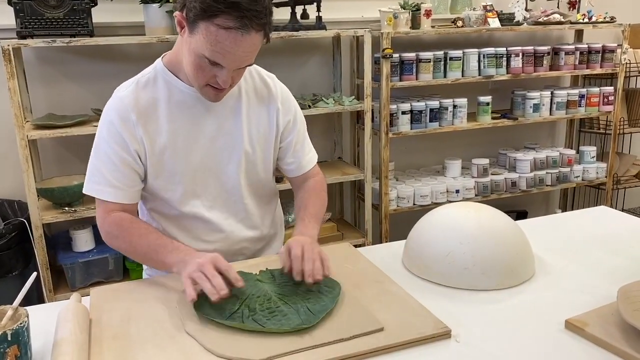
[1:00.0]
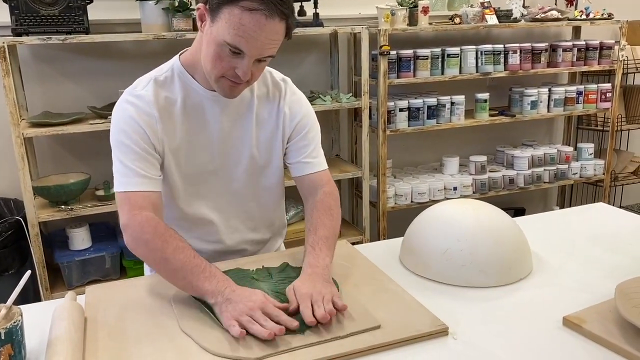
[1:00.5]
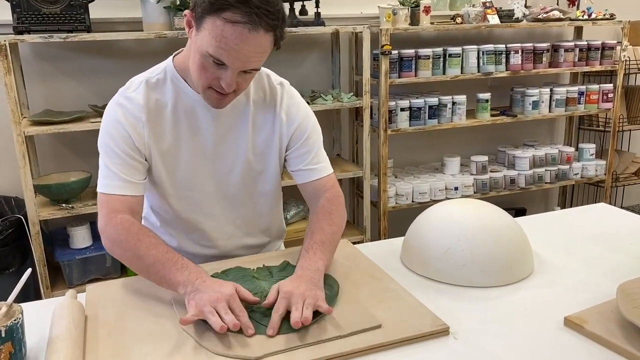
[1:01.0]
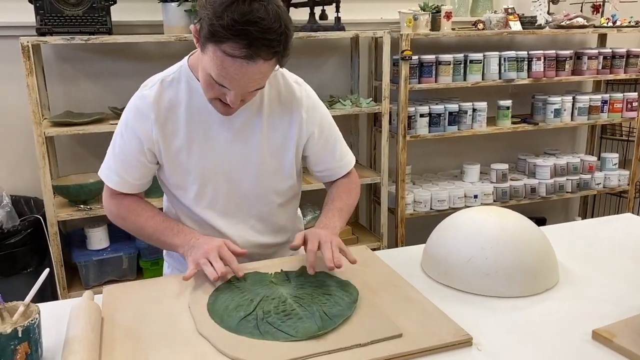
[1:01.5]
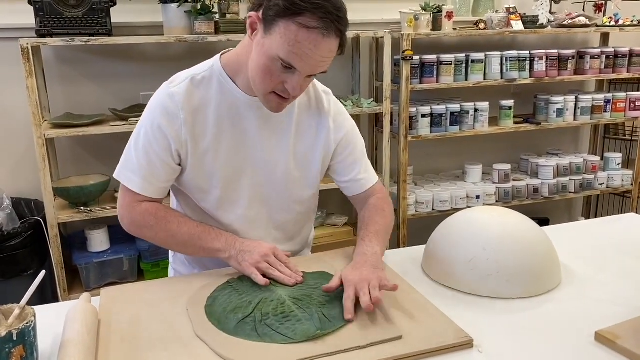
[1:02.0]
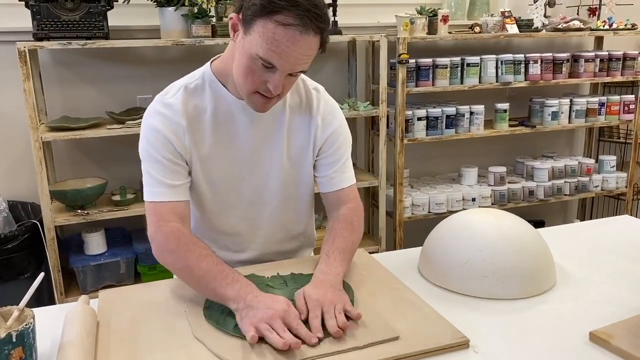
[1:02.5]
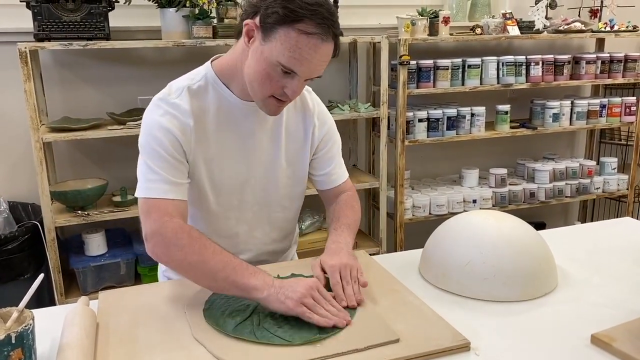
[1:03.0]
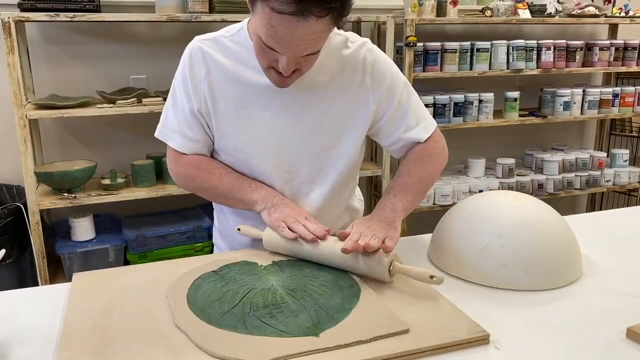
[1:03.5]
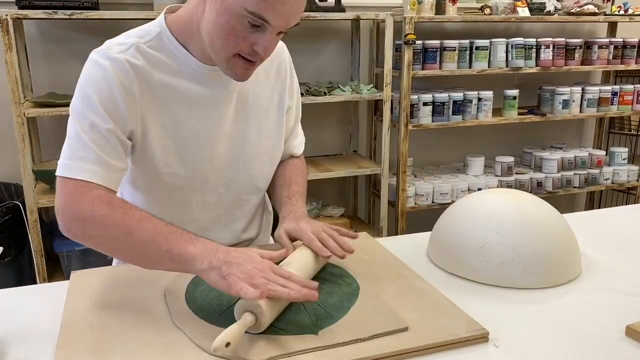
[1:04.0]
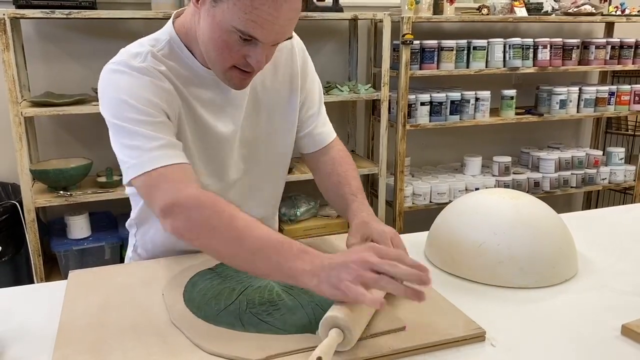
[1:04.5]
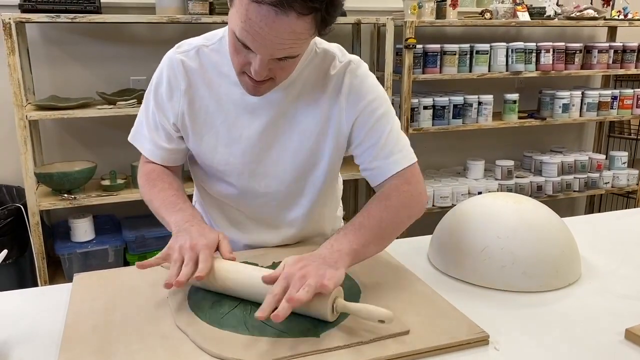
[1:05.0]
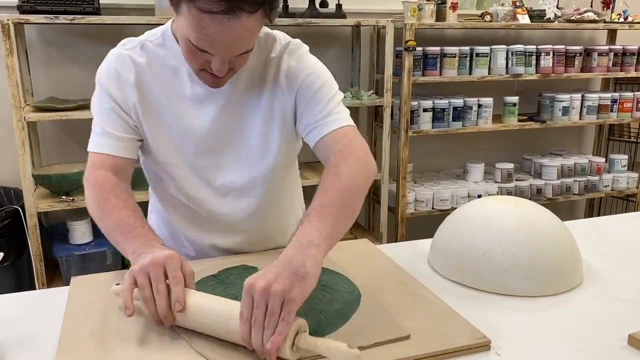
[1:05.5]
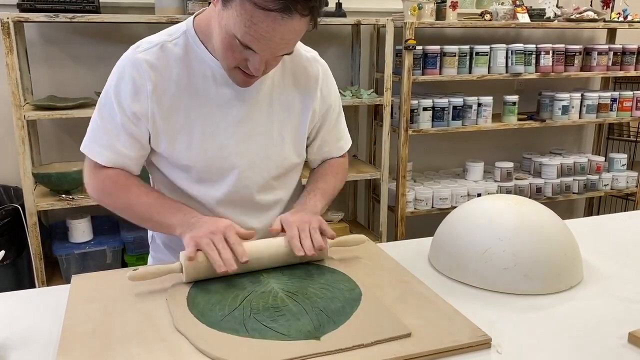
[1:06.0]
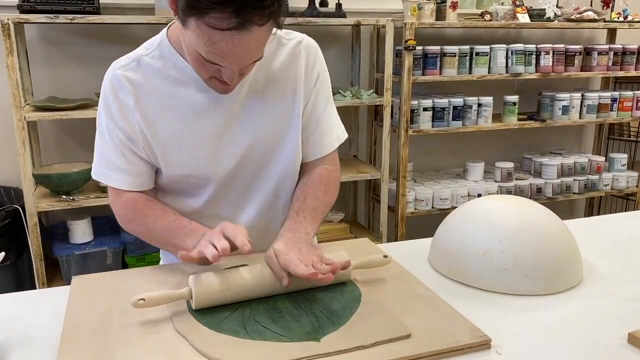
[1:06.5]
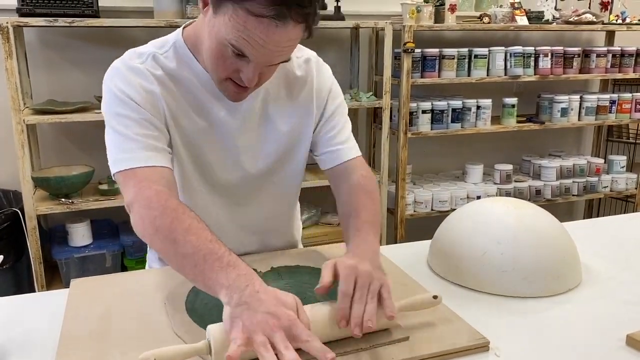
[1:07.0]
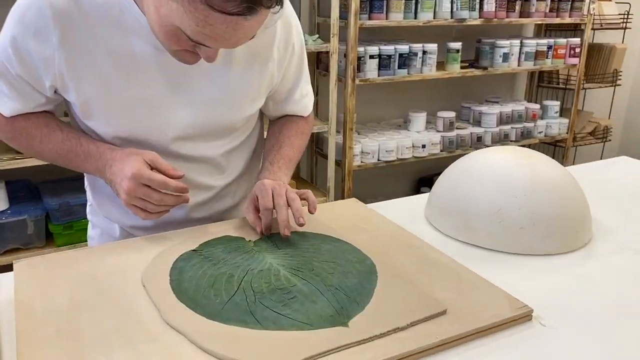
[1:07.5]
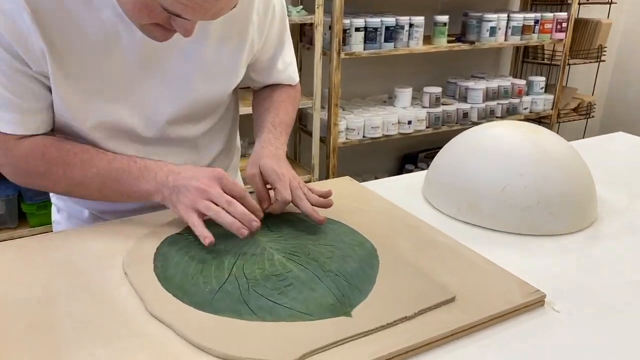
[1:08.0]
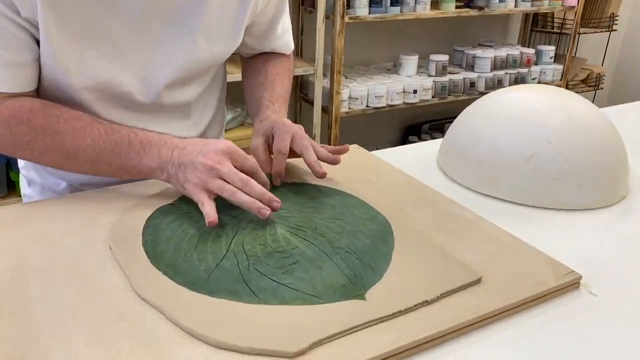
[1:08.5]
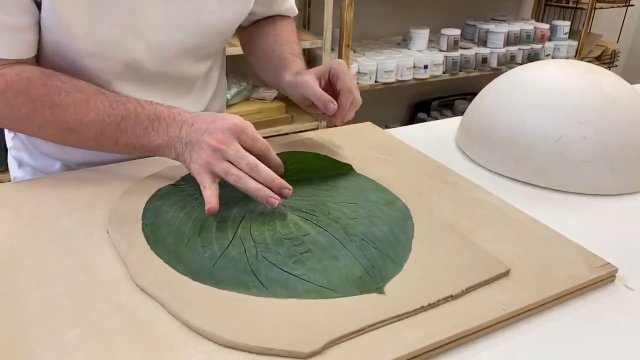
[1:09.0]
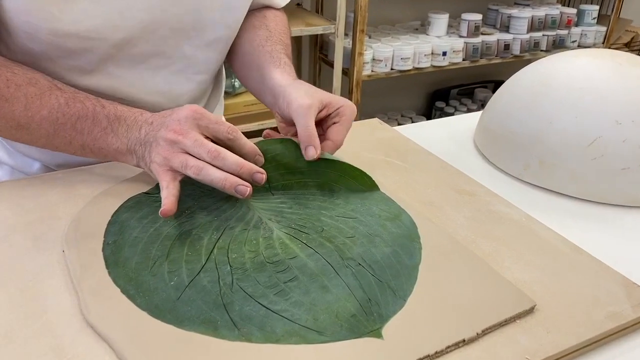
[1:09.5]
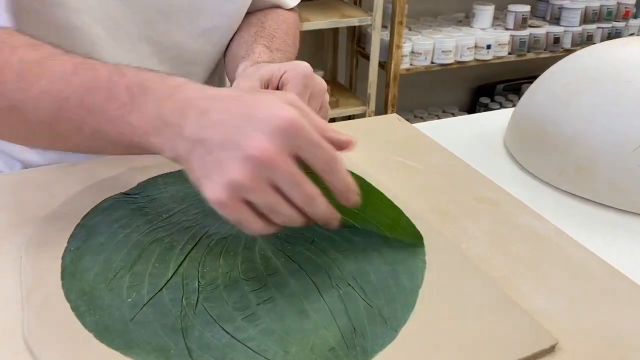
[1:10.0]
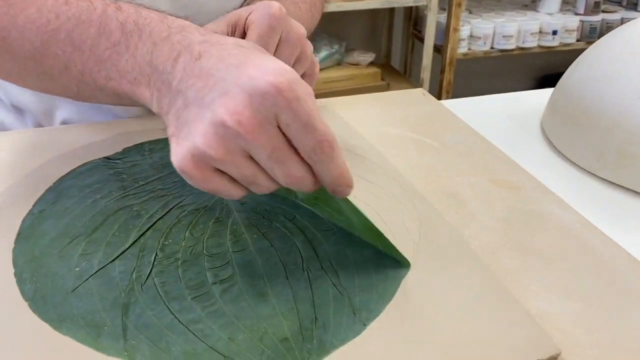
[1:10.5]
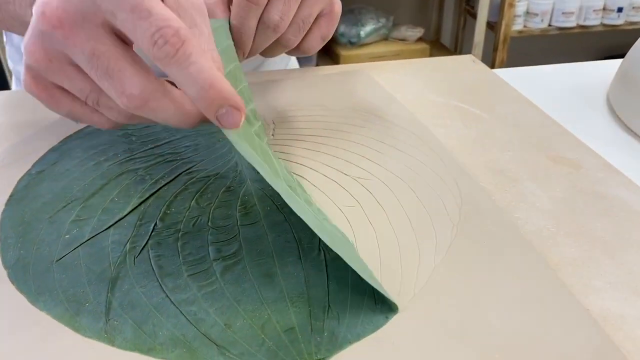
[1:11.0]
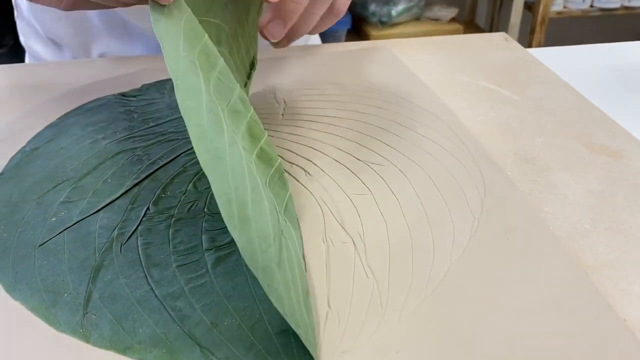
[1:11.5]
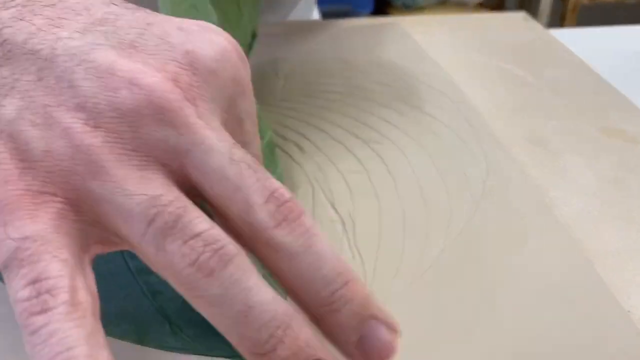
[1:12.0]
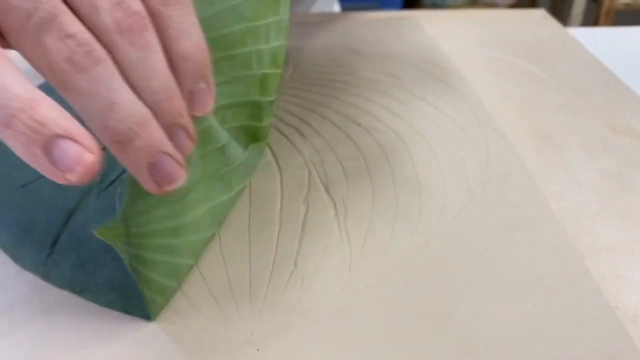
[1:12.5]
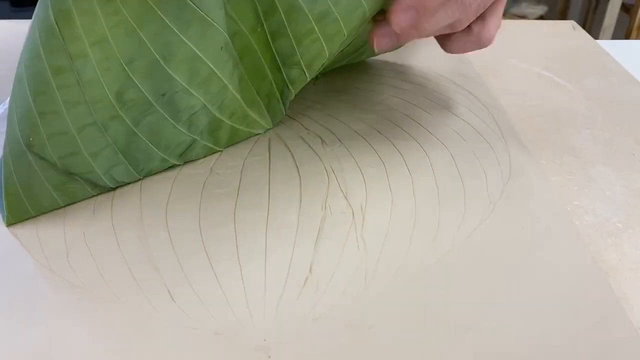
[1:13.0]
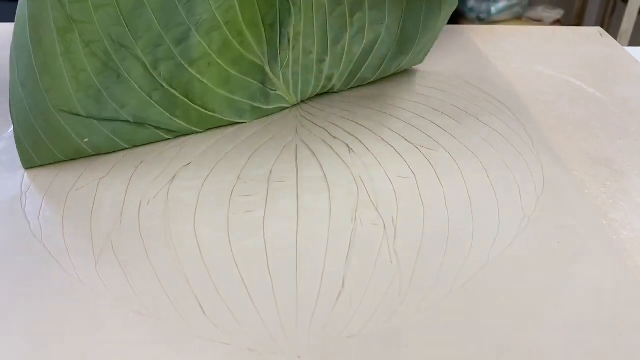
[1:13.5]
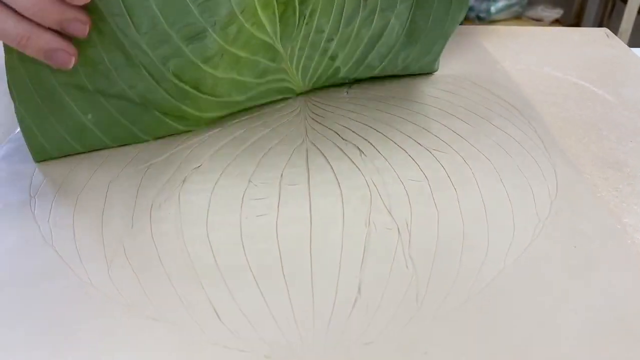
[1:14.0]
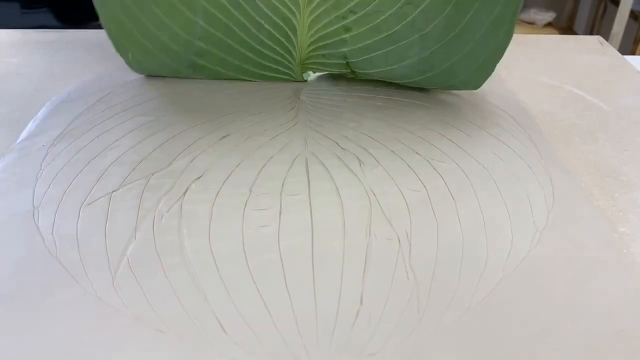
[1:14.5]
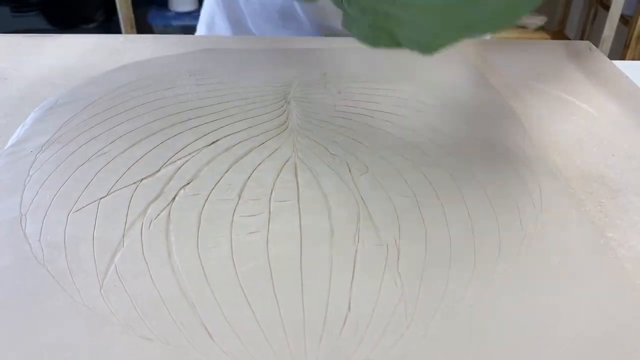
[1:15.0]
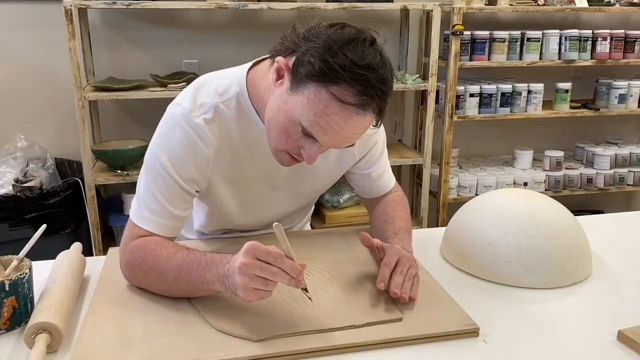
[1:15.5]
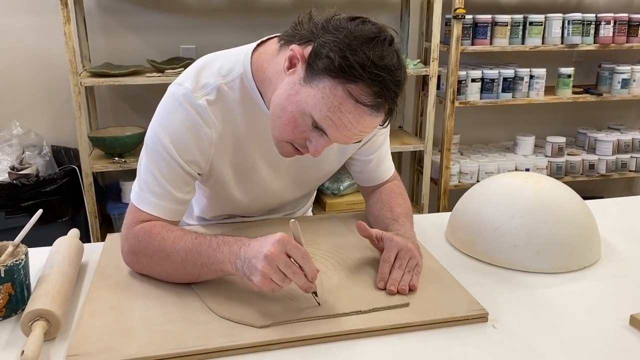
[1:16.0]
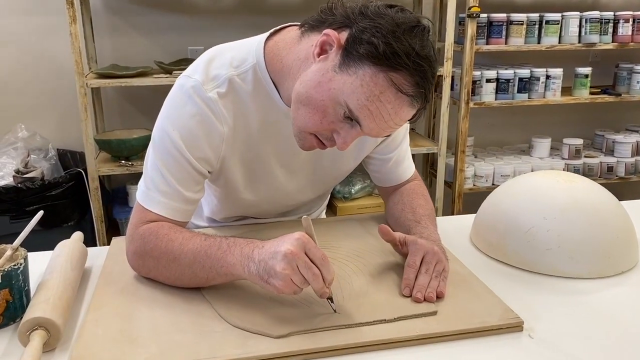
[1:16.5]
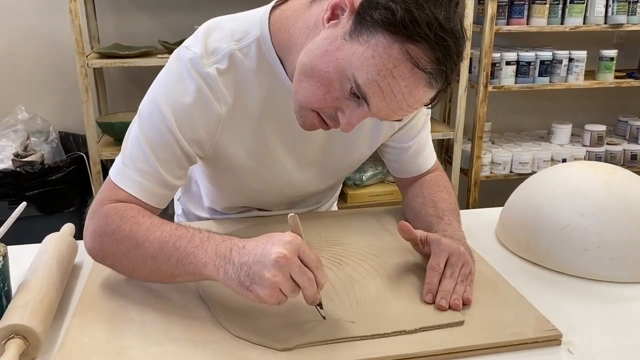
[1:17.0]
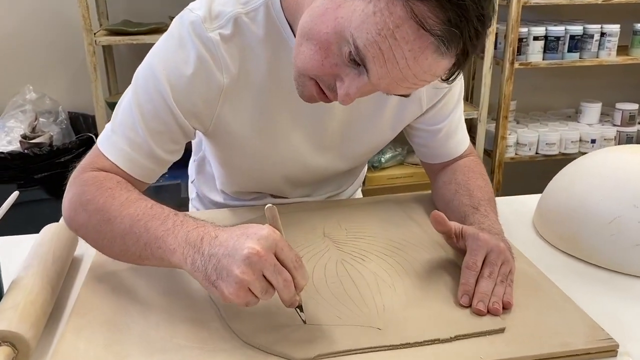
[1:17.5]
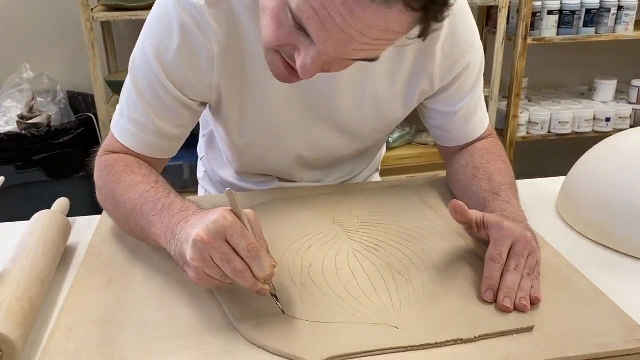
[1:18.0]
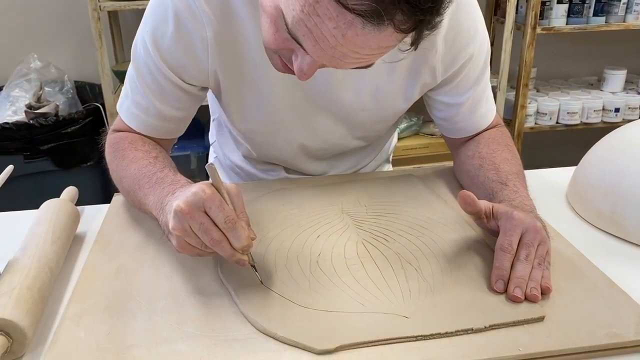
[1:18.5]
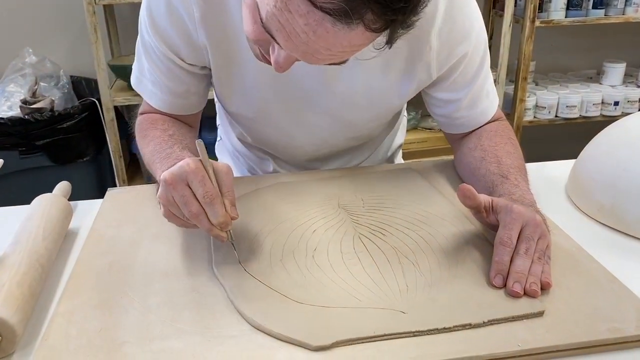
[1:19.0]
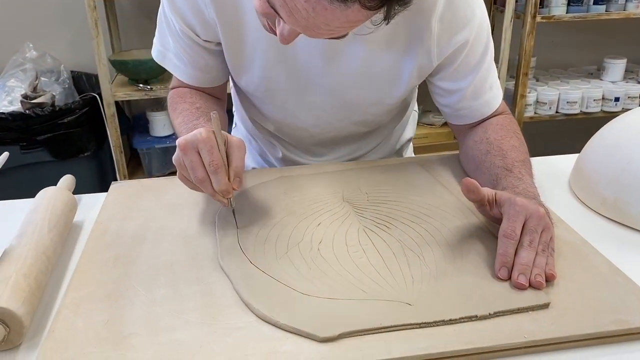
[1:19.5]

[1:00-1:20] The man keeps flattening the green leaf-shaped putty object with both hands. A tan wooden rolling pin comes into view, and he uses it to roll the object out further and flatten the surface. He then gently and slowly pulls the green object up with both hands, revealing that it has imprinted the same shape on the putty below. With the green object out of frame, he uses a sharp scalpel to begin outlining another shape in front of him, a tan piece that appears to be the leaf he was flattening. He starts cutting at the top and slowly and accurately cuts around the outline.